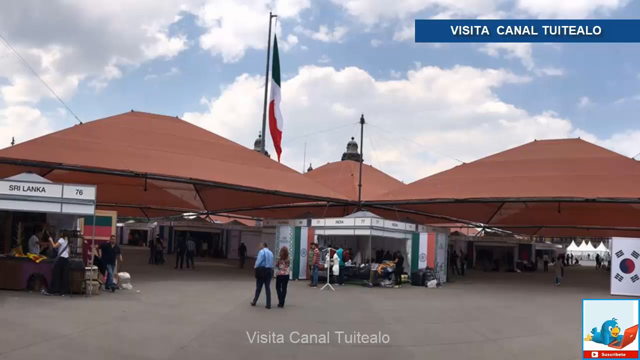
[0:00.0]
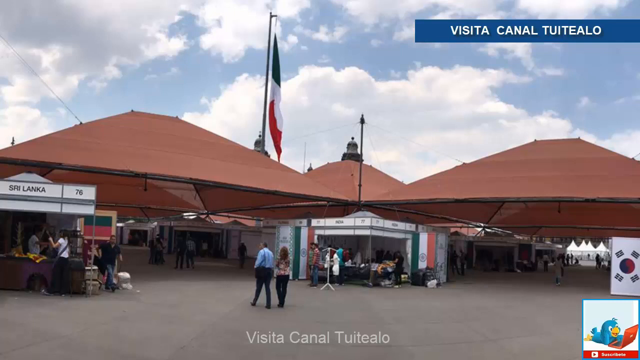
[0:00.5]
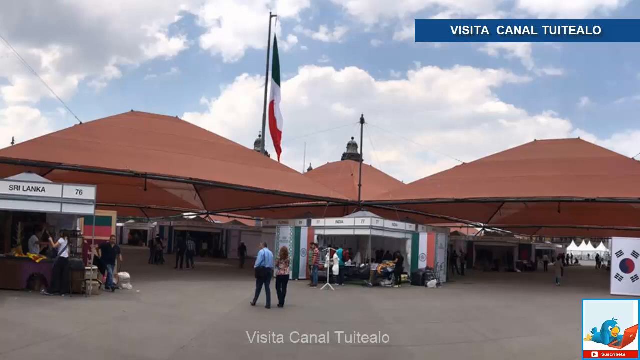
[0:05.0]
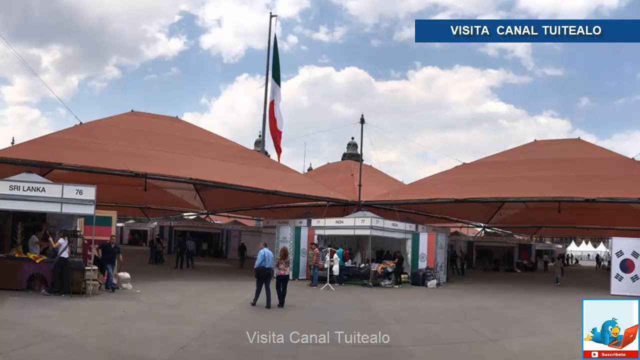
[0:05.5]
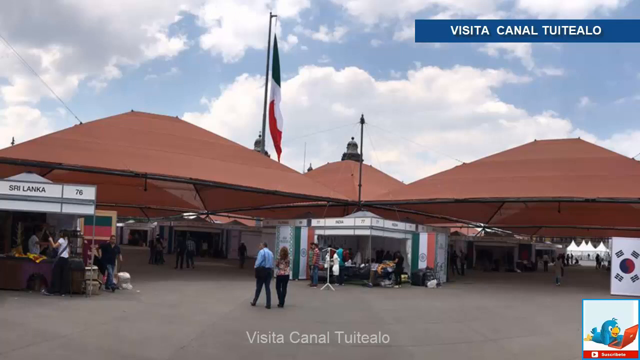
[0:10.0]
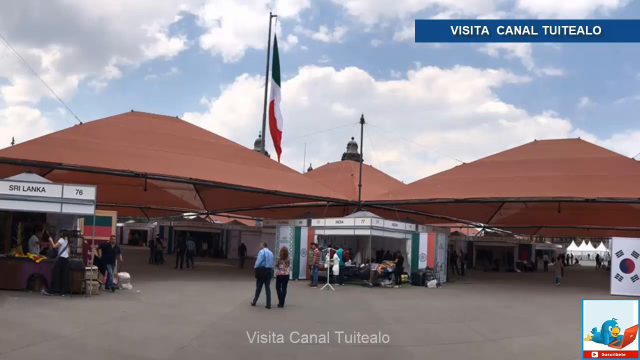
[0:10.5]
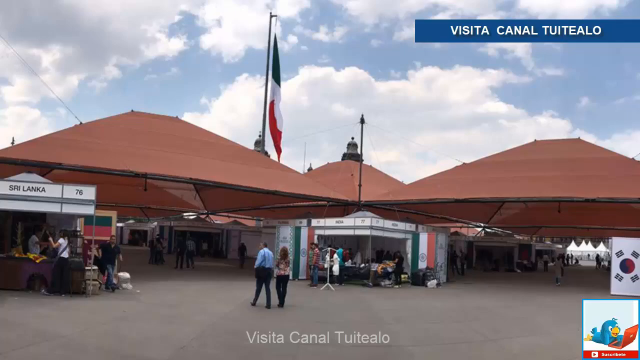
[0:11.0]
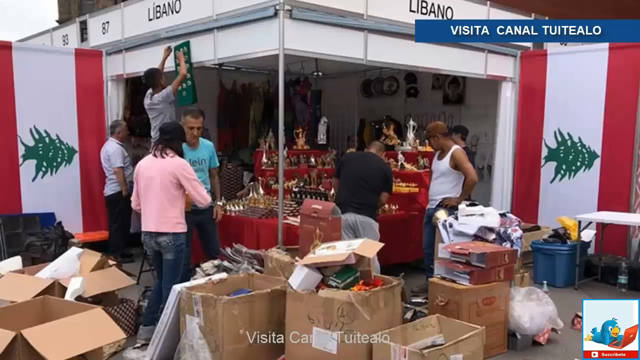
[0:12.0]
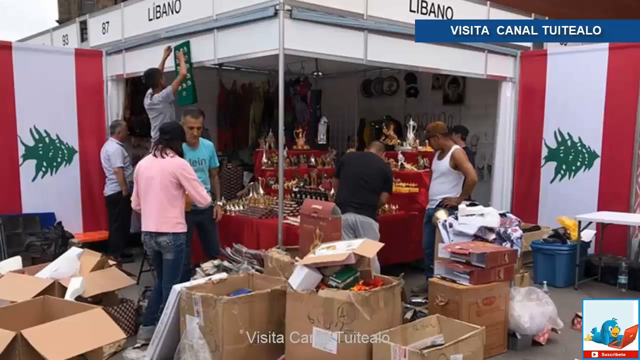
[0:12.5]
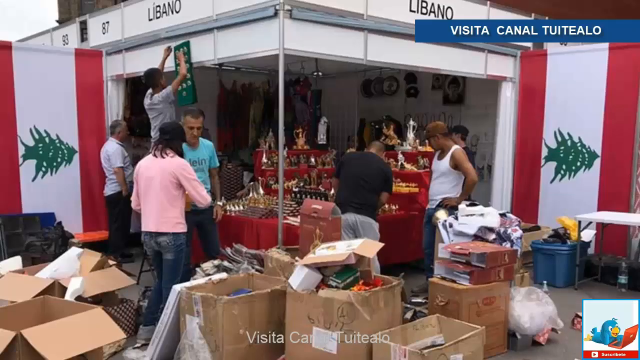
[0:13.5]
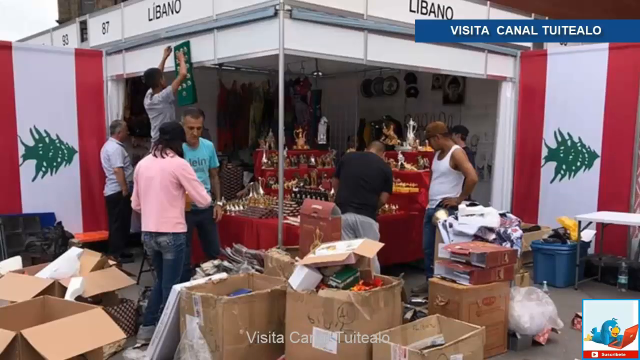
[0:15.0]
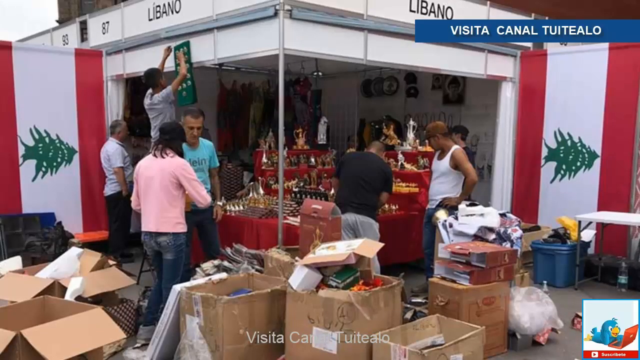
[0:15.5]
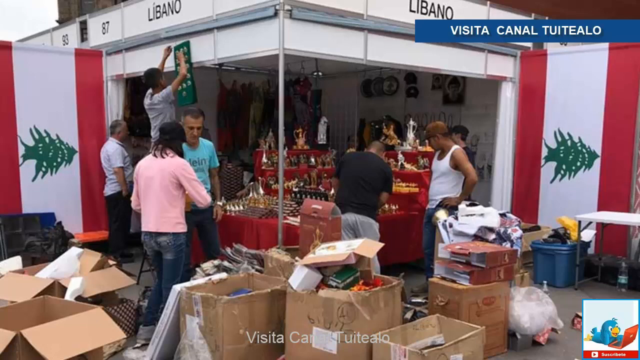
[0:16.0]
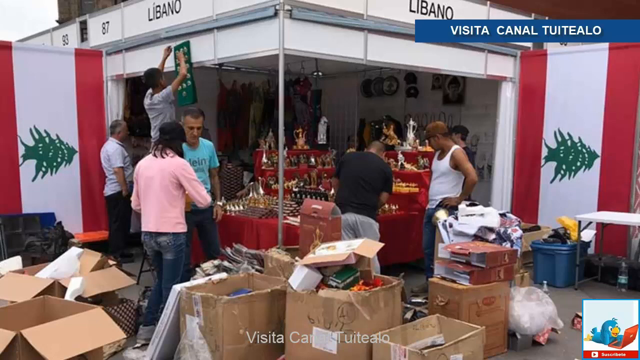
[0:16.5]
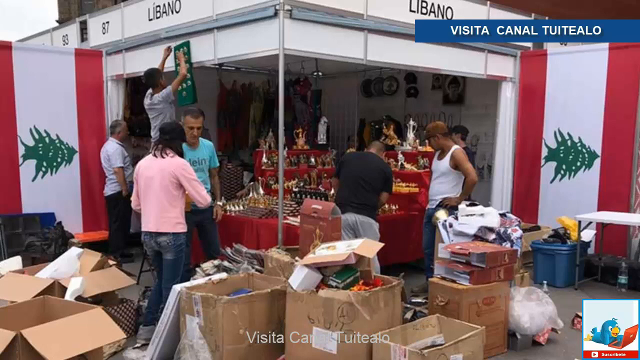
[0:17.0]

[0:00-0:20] The video shows a canal somewhere in Italy, where there appear to be two people walking down a dark concrete street or possibly a seller's market. Very large orange tents cover the different sections of the market, and the words "Sri Lanka" appear on top of one of the vendor sections. The man wears a blue shirt and is holding hands with a woman in a multi-patterned shirt; both wear long pants. It is hard to tell where they are going or what they are going to look at. A zoomed-in view of a seller's space follows, where they appear to be selling something like jewelry or accessories. Cardboard boxes are all over the place, perhaps with merchandise and/or trash, and the space is very cluttered.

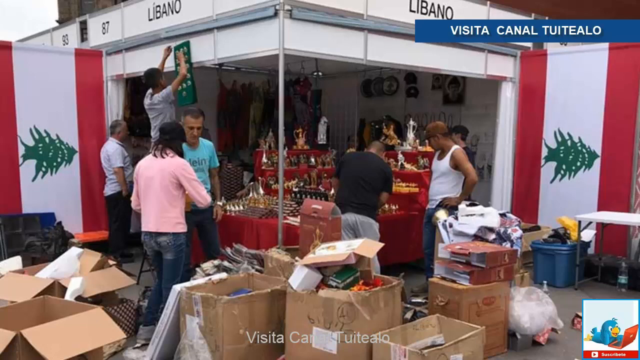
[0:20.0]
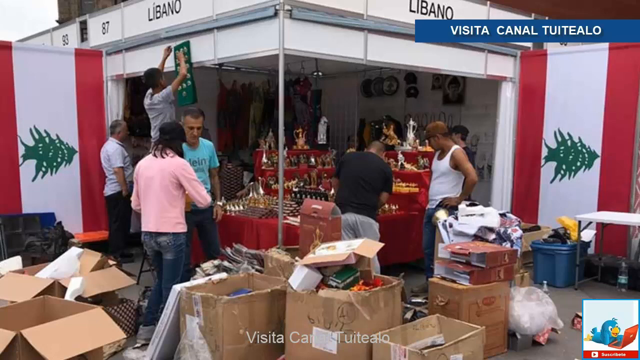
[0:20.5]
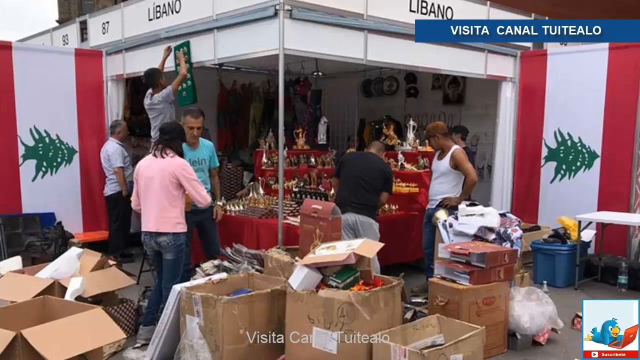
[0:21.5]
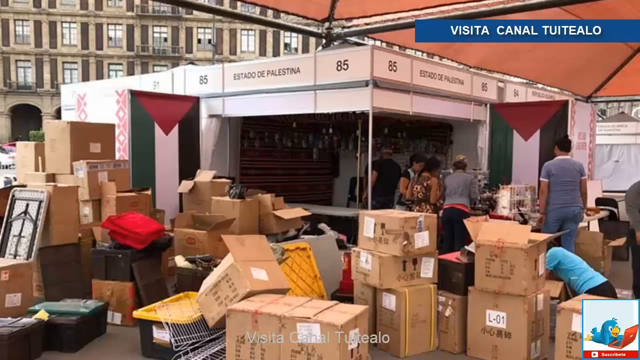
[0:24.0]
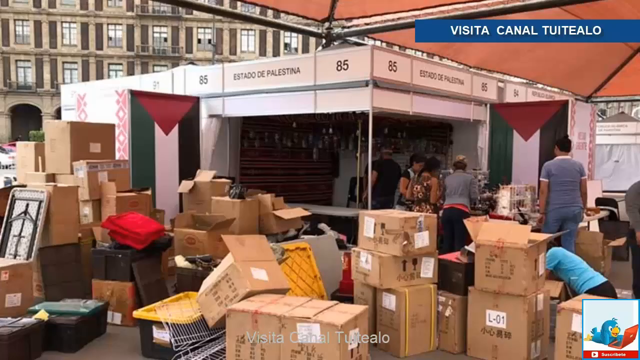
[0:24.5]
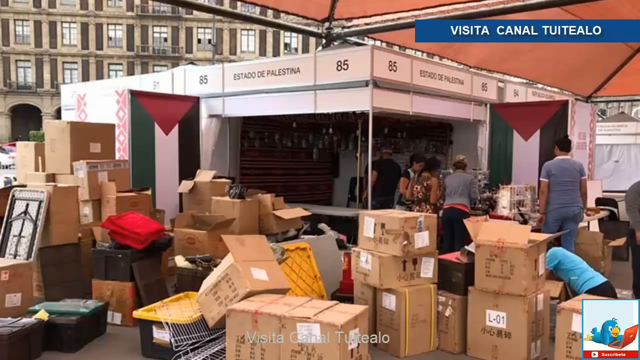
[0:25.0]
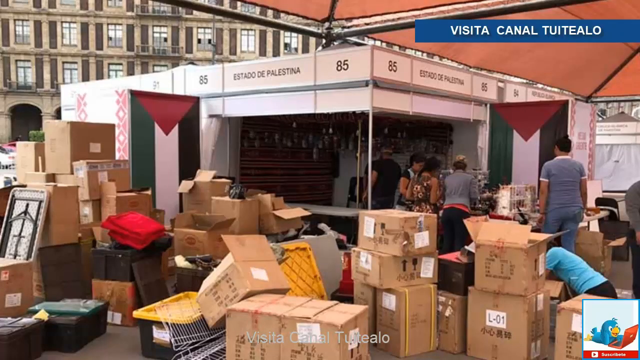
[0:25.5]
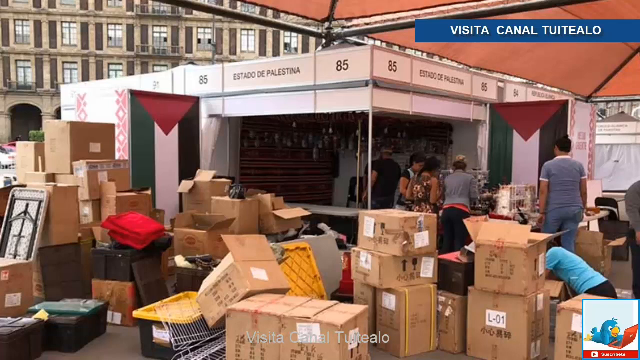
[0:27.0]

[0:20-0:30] A close-up view shows a seller's space where trinkets or things native to their country are being sold. The letters "LIBANO" appear at the top of the seller's space. There is also something that appears to be a country flag with red stripes on each side and a white stripe in the middle; in the middle of the white stripe is a green symbol that looks like a tree pointing to the right. A man in a white tank top and a brown hat is also present.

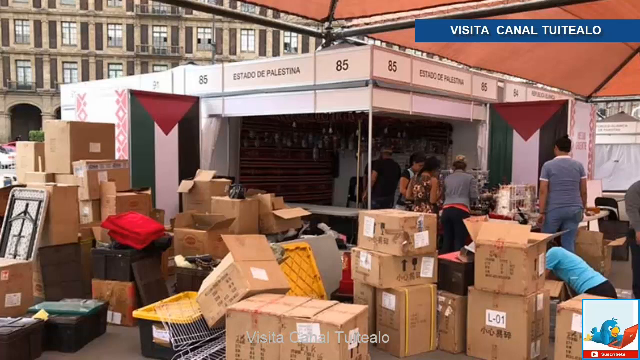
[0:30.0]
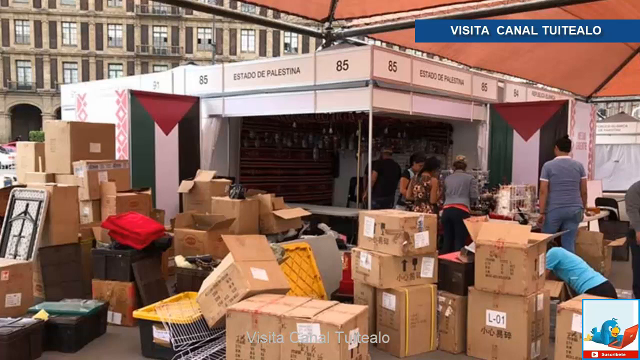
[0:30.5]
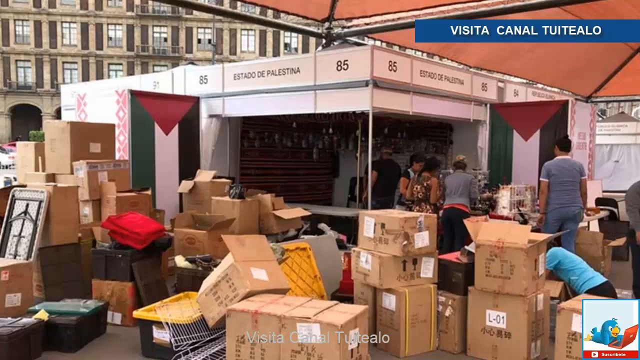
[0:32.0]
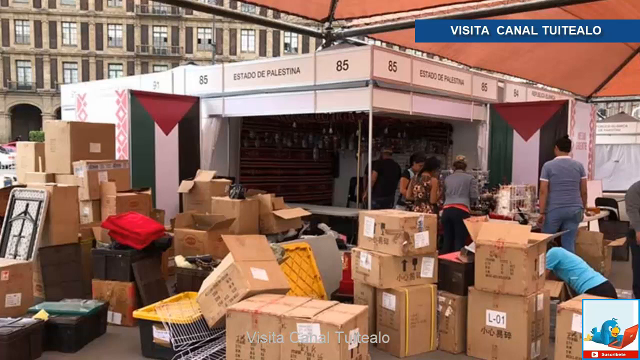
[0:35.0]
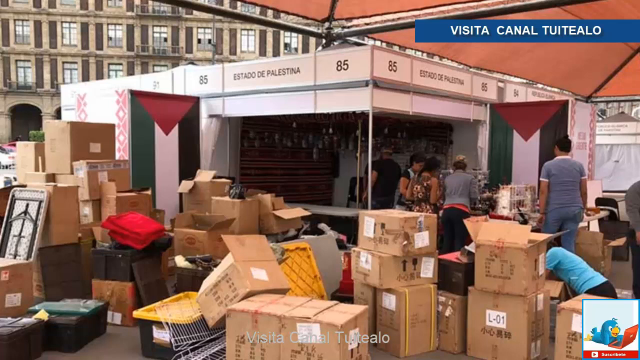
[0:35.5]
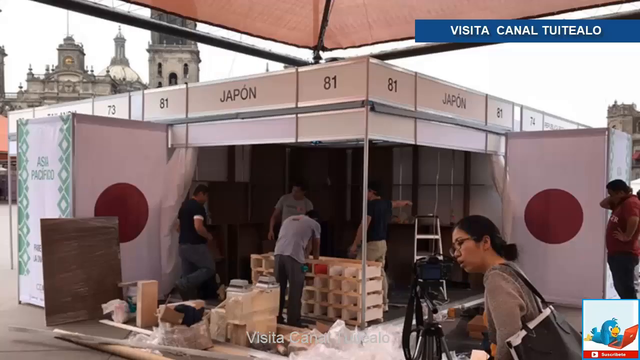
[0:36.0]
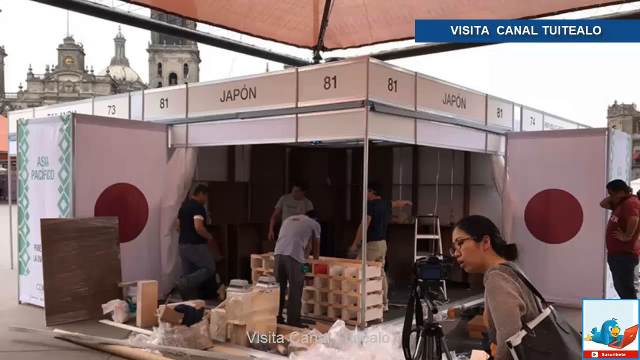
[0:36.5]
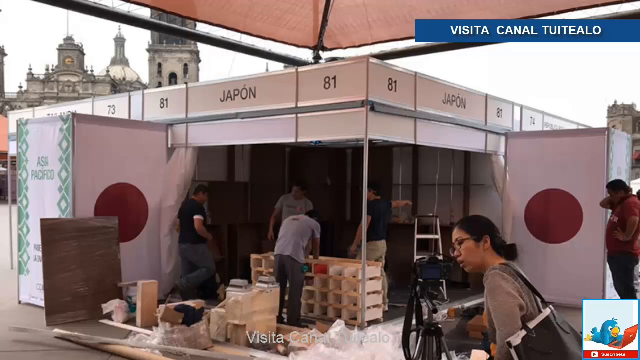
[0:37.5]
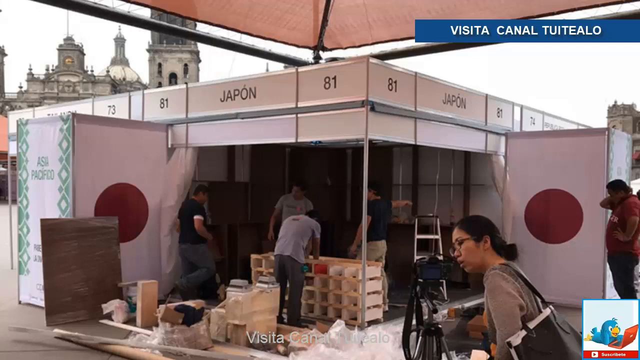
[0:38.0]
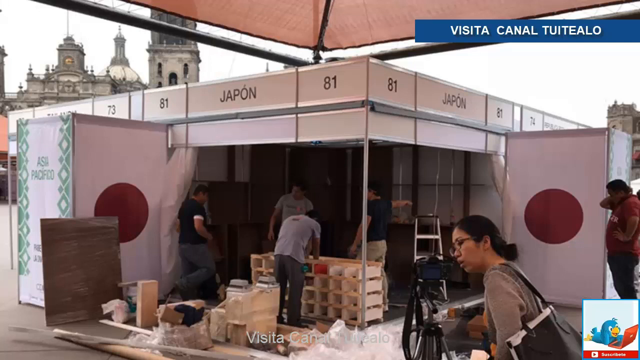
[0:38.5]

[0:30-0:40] A seller's space is very cluttered with boxes. A large panel has a white stripe in the middle, green stripes on the sides and a burgundy triangle at the top; it is unclear whether it is a country flag or just the seller's logo. A man in a gray shirt with white stripes on the short sleeves and neck, wearing jeans, is looking at this flag. A person in a teal shirt is behind the cardboard box, and even further in the distance a person in a gray long-sleeve shirt is looking at the merchandise for sale.